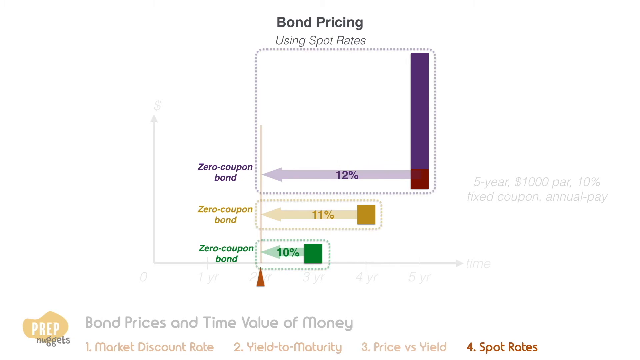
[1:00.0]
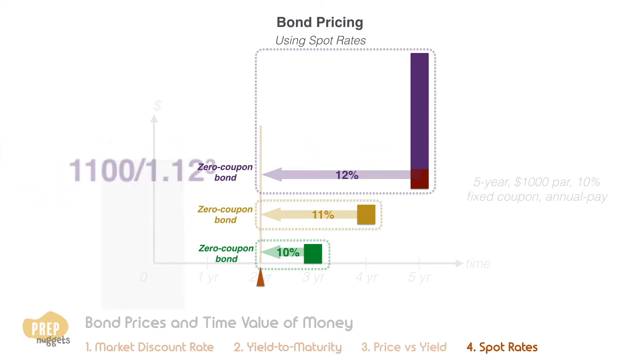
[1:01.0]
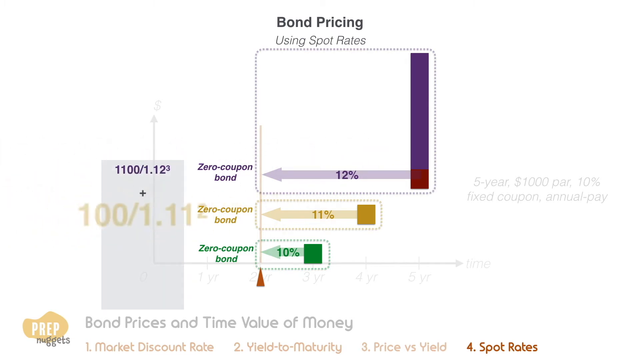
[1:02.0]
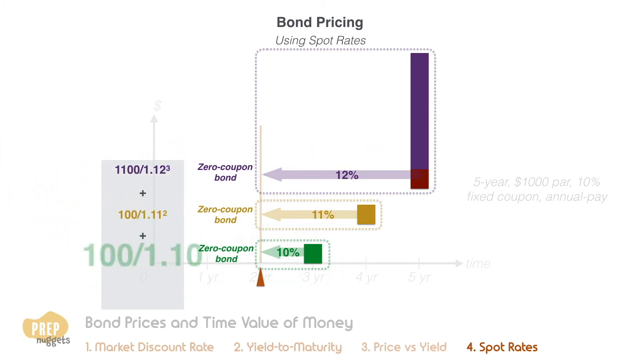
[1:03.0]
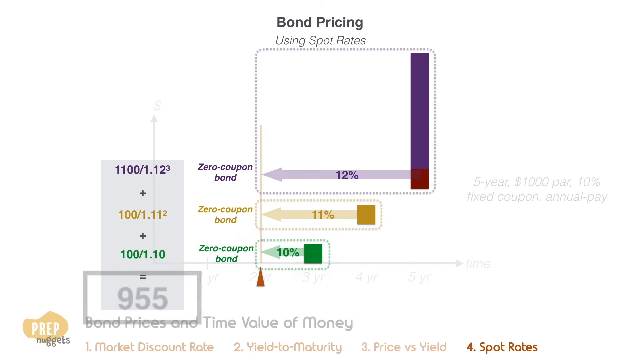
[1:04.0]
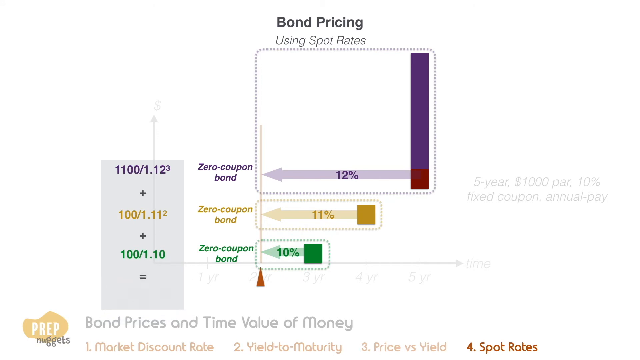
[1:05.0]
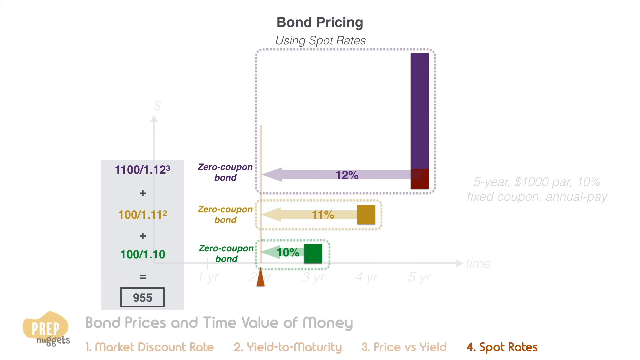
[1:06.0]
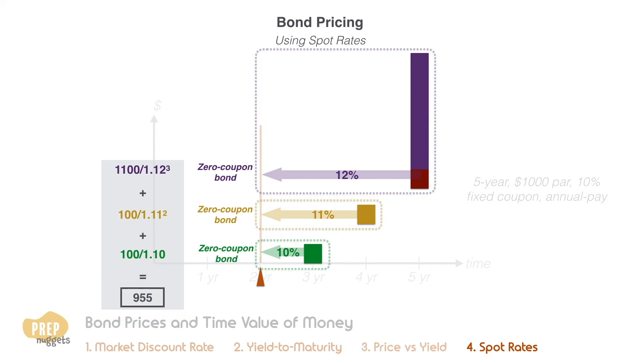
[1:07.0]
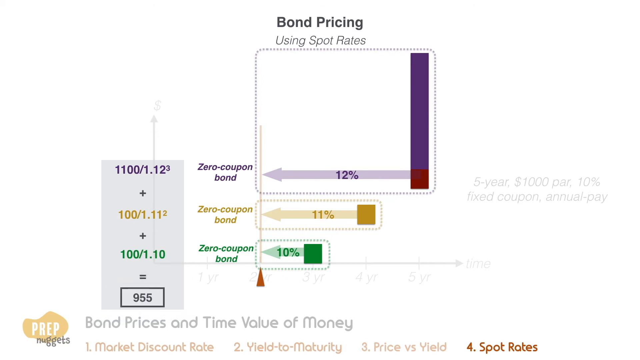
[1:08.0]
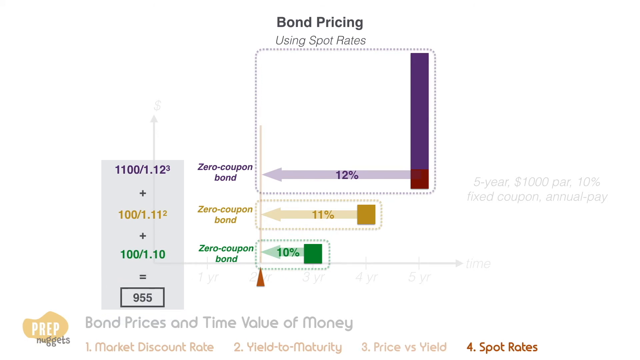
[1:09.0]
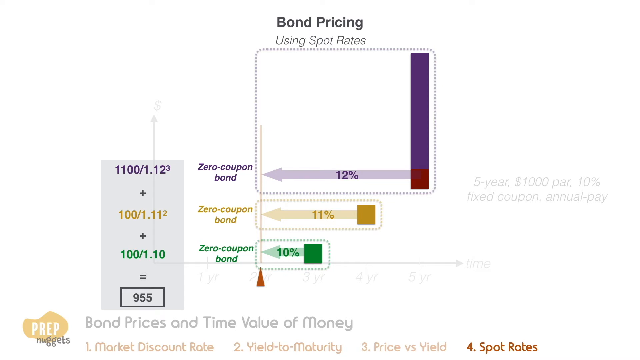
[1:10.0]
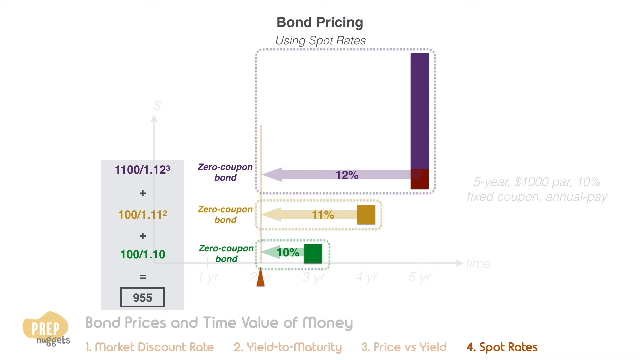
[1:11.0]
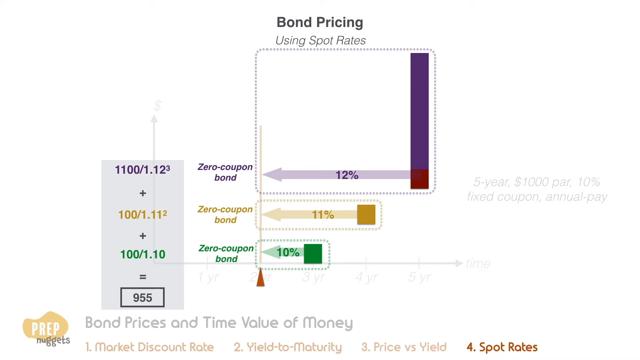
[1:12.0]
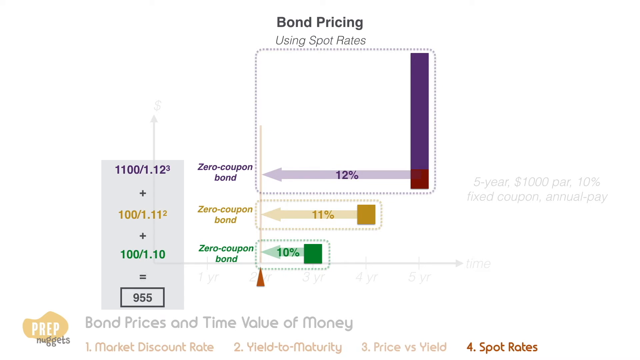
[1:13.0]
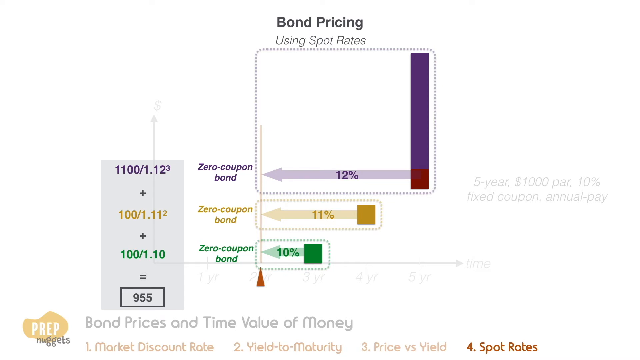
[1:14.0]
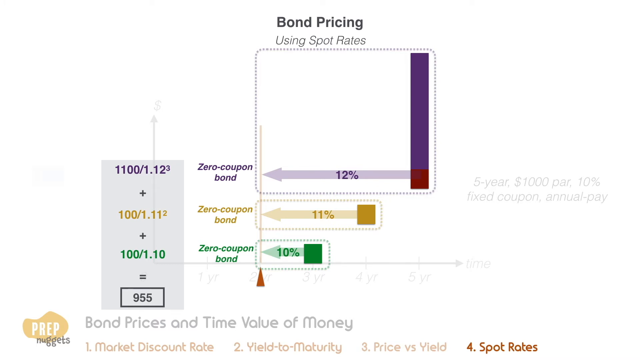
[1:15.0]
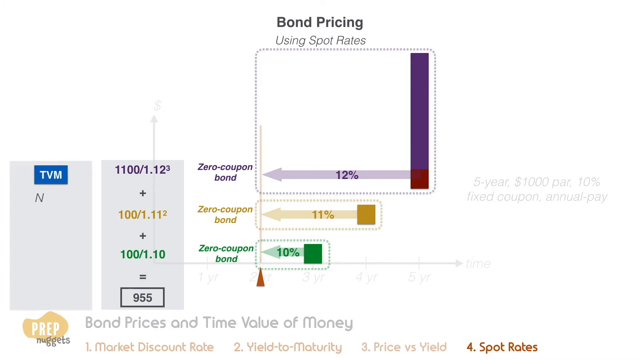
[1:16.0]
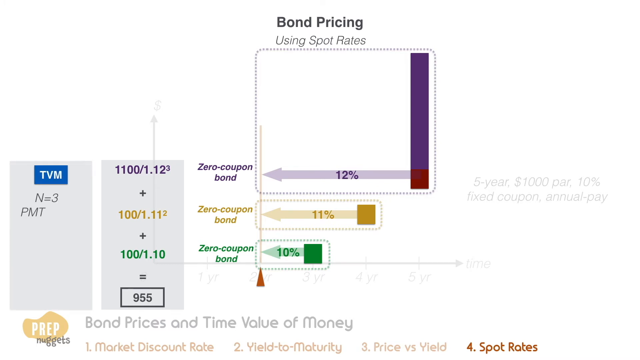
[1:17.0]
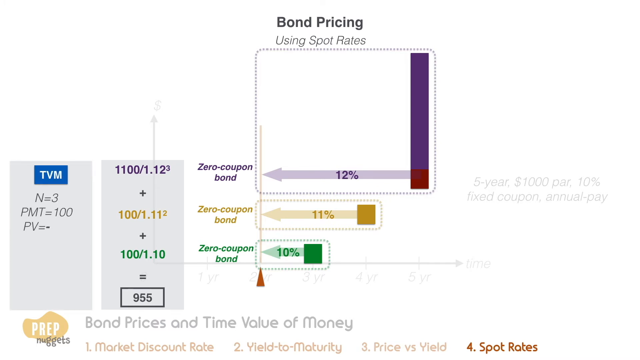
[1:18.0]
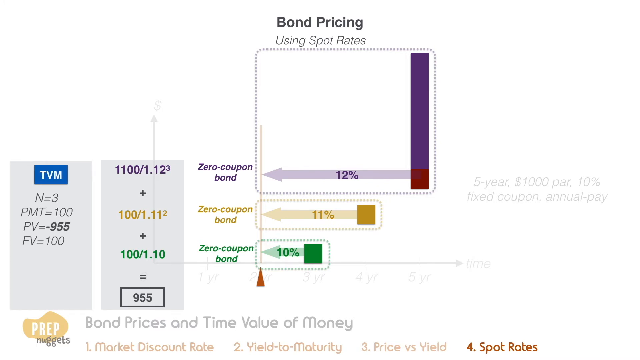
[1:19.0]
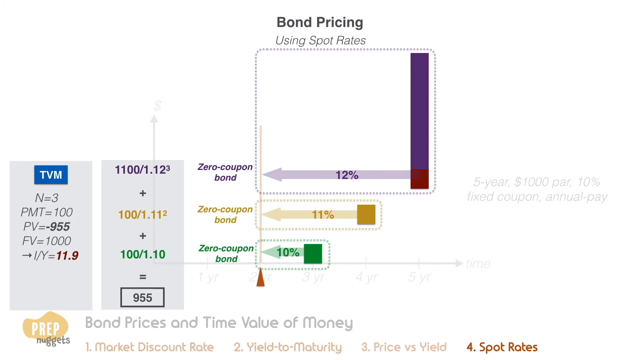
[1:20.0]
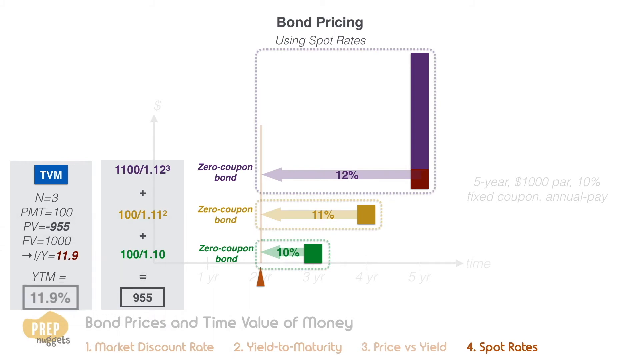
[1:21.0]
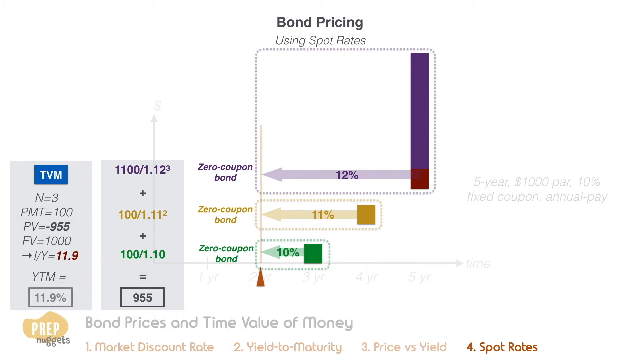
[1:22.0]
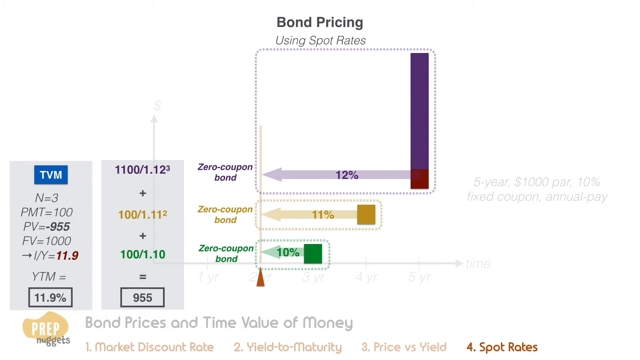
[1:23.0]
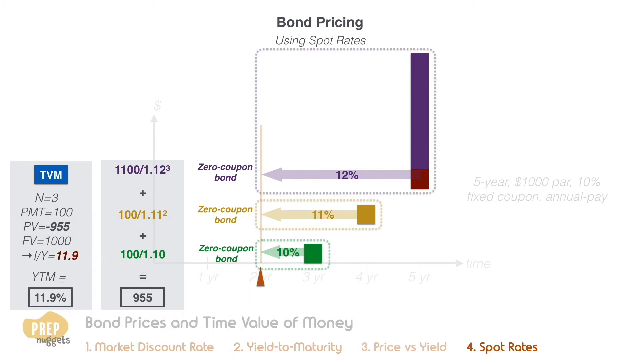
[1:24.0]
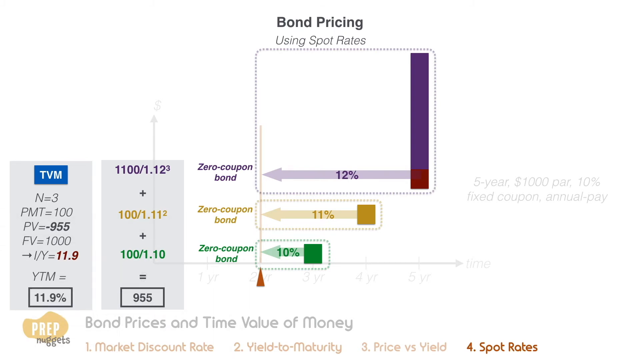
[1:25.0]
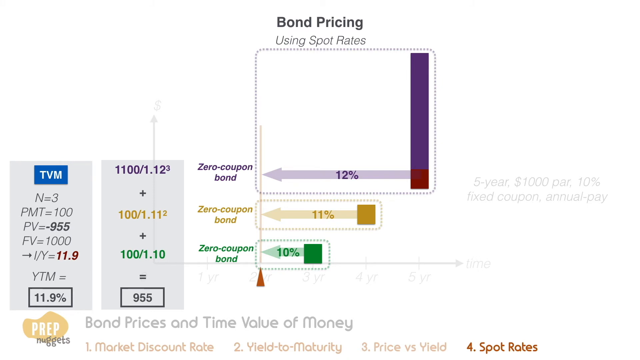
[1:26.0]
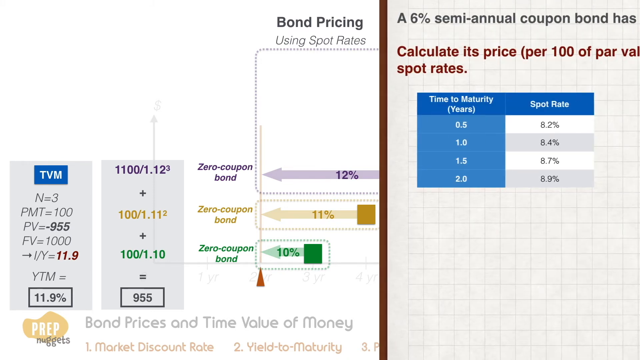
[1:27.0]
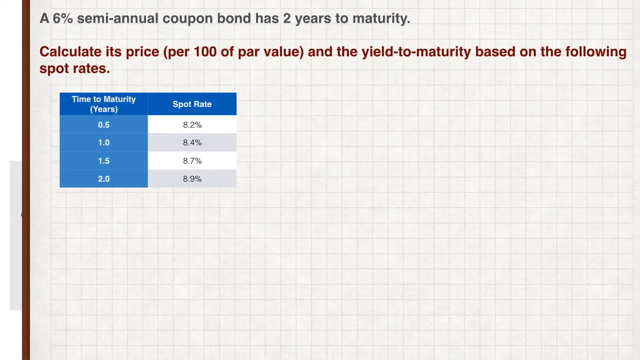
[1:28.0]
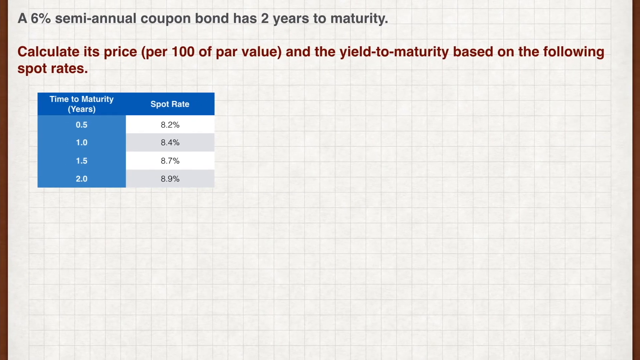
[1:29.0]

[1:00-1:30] An equation appears: 1,100 divided by 1.12 to the third, written in purple across from the 12% bar. Then "plus", and the next line, in yellow, reads 100 divided by 1.19 squared, also across from the yellow bar. Underneath, in green, it says plus 100 divided by 1.10, apparently relating to the 10% shown at the bottom. The total comes to 955. Another equation then appears: TVM, N = 3, PMT = 100, PV = -955, FV = 1,000, I/Y = 11.9, and YTM = 11.9.